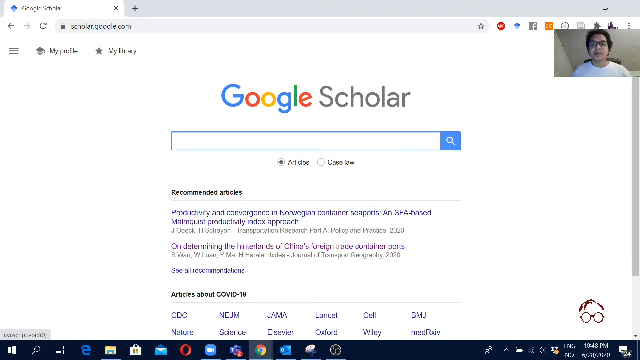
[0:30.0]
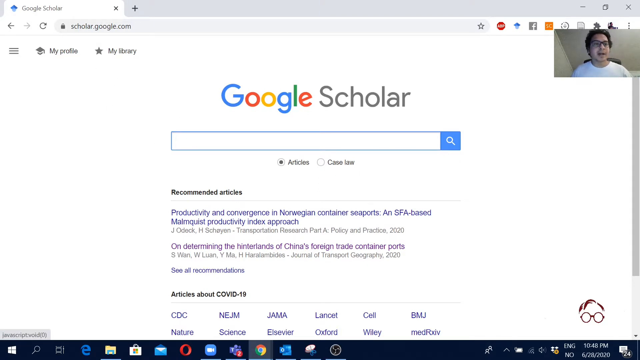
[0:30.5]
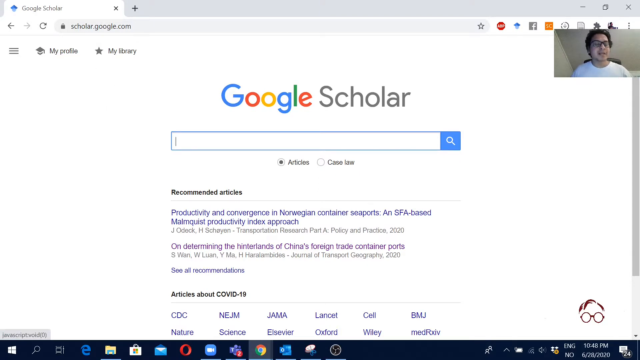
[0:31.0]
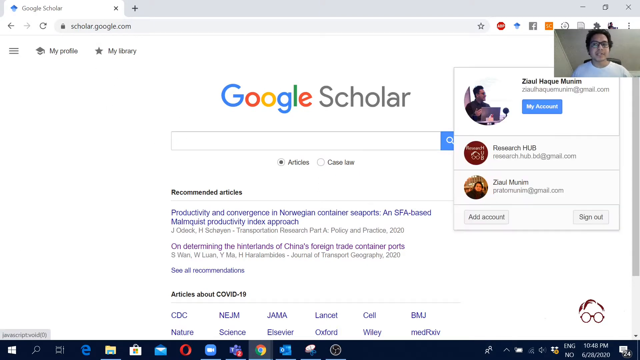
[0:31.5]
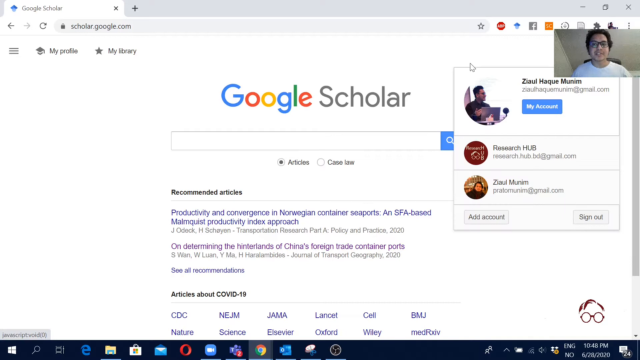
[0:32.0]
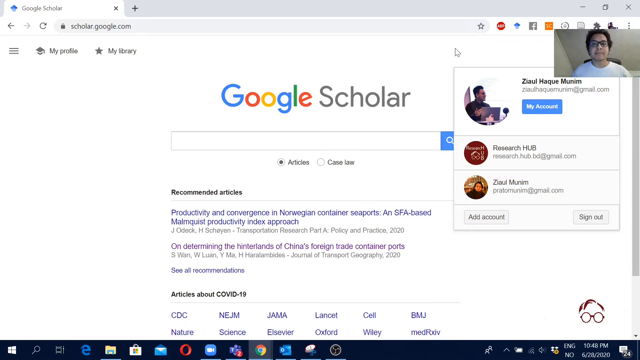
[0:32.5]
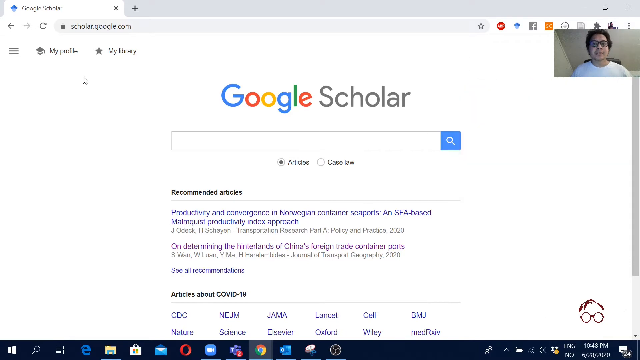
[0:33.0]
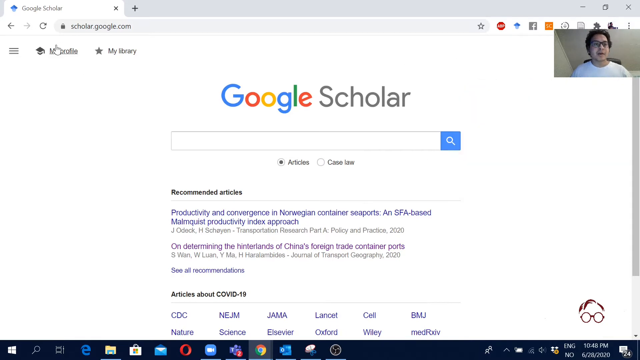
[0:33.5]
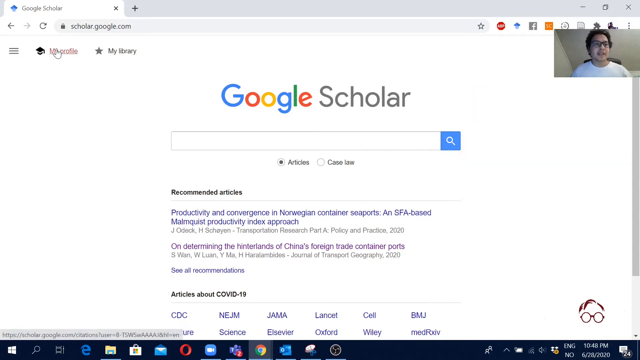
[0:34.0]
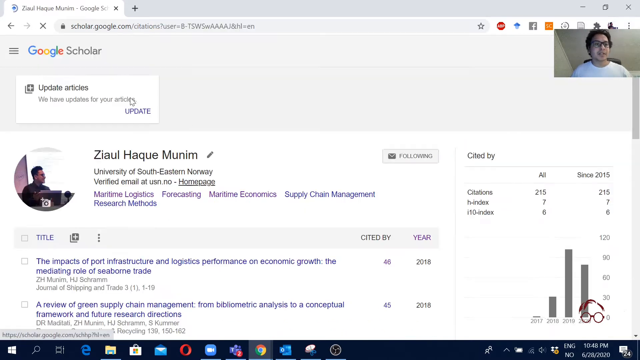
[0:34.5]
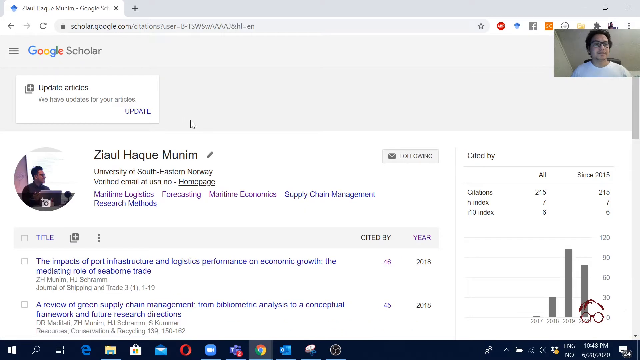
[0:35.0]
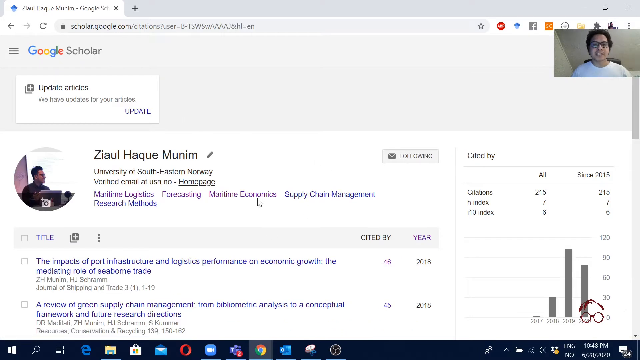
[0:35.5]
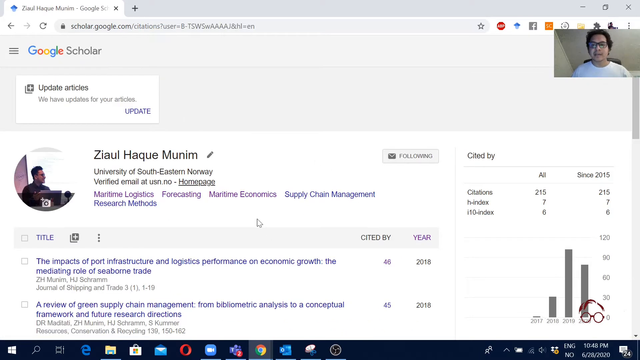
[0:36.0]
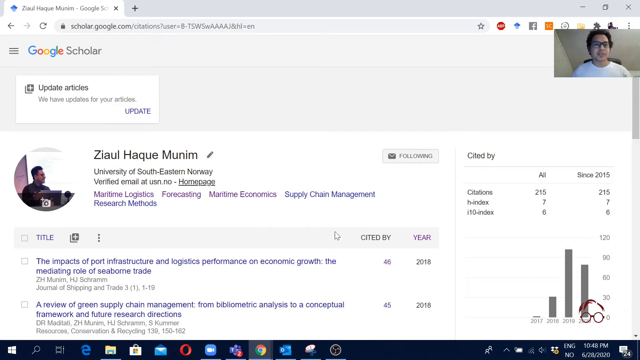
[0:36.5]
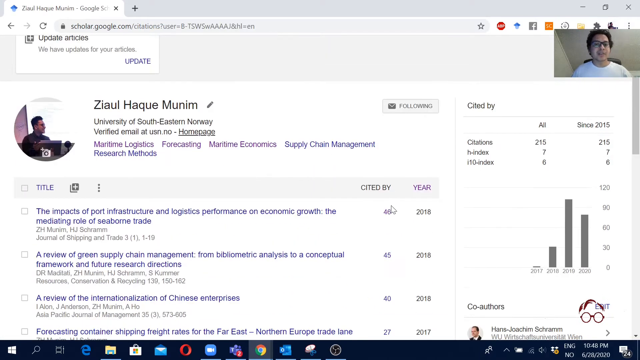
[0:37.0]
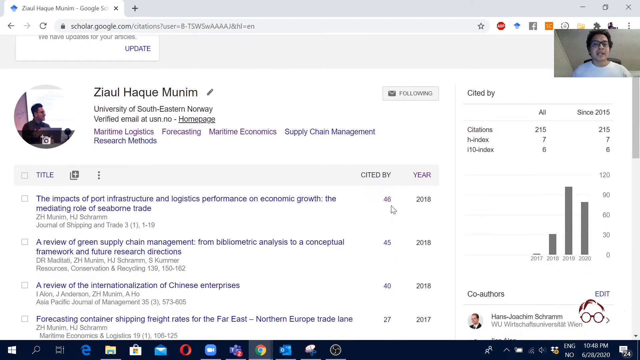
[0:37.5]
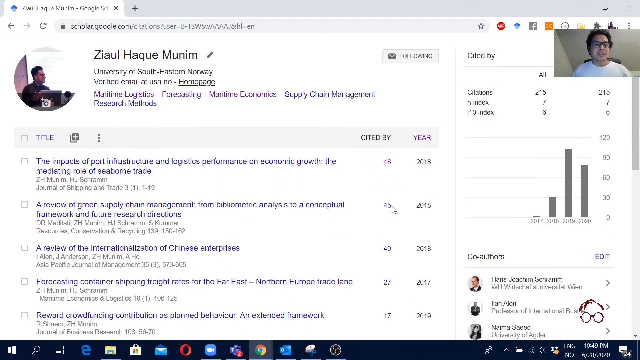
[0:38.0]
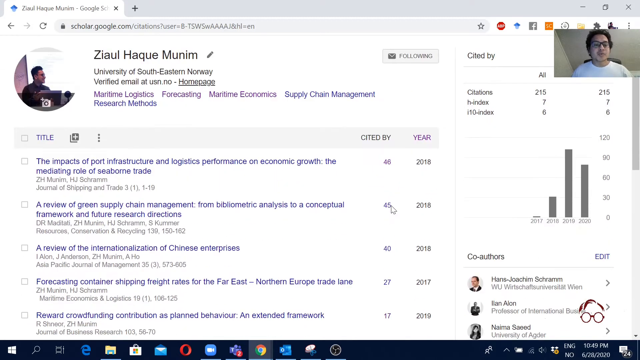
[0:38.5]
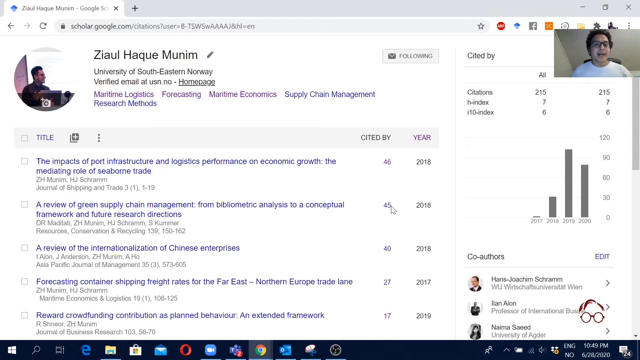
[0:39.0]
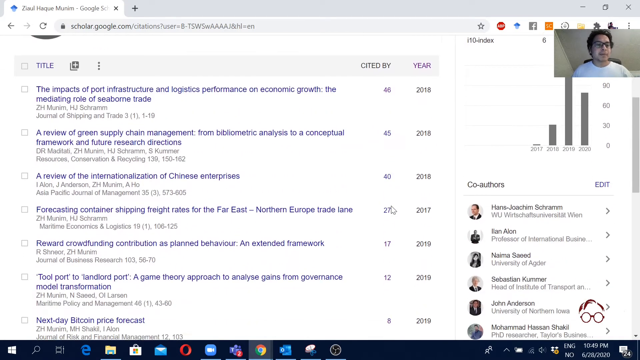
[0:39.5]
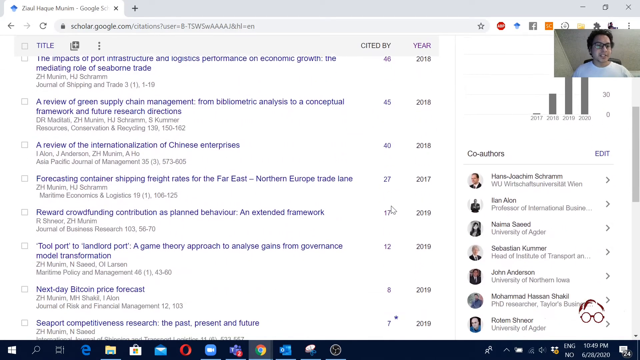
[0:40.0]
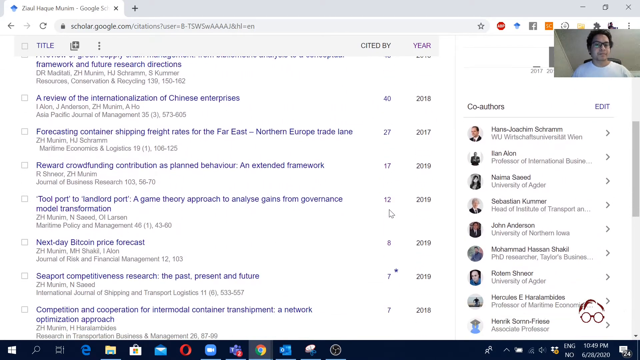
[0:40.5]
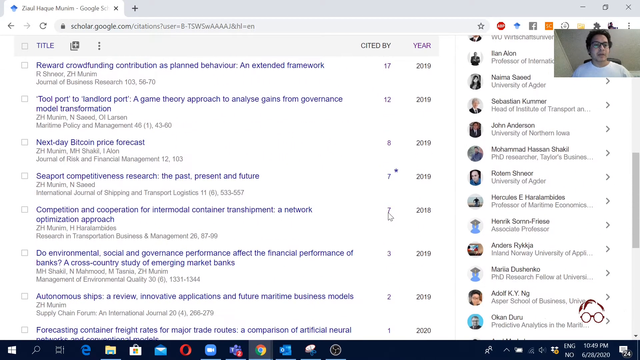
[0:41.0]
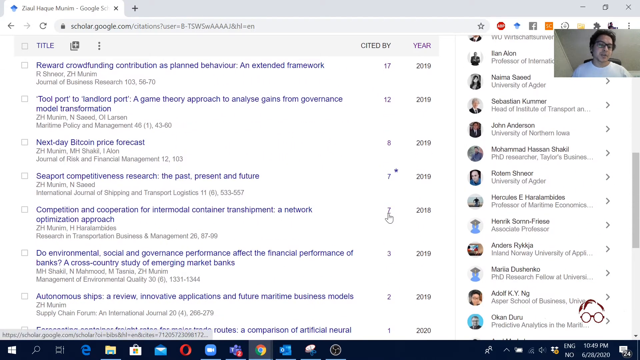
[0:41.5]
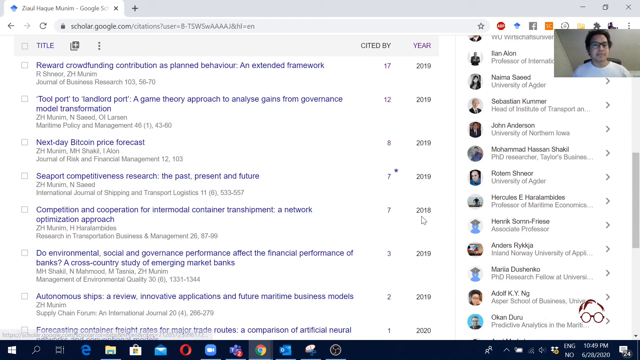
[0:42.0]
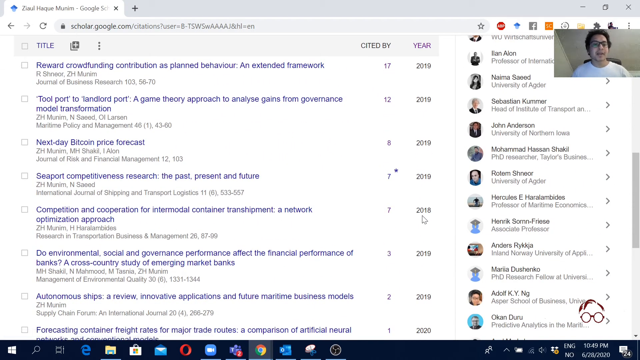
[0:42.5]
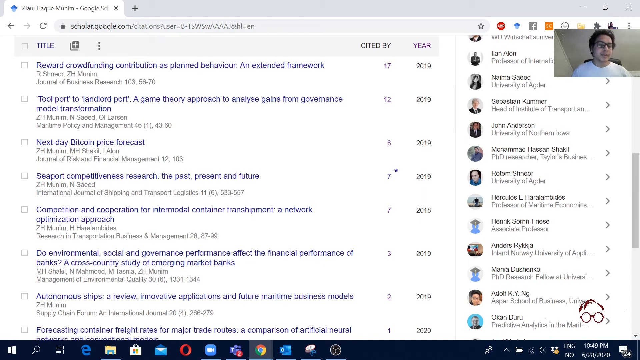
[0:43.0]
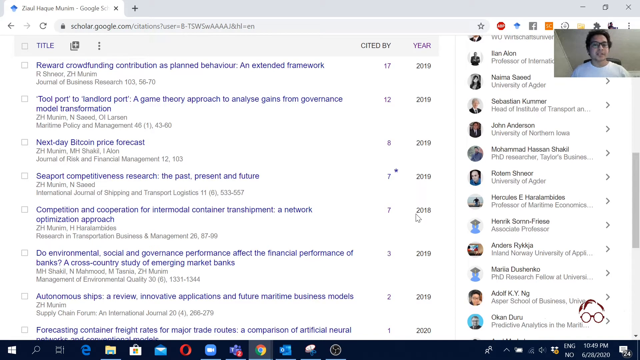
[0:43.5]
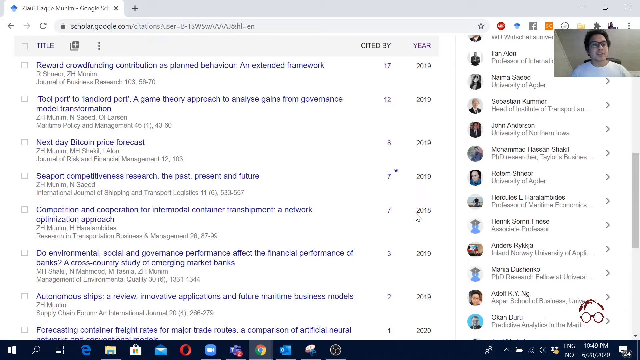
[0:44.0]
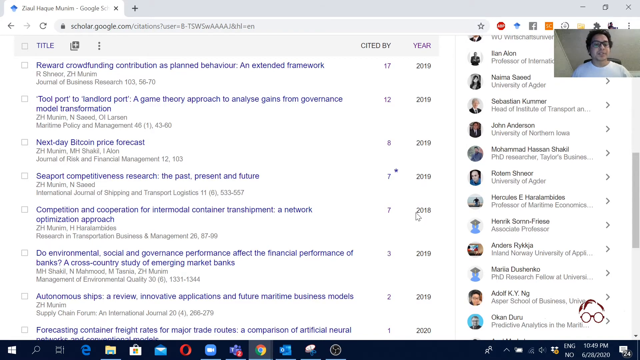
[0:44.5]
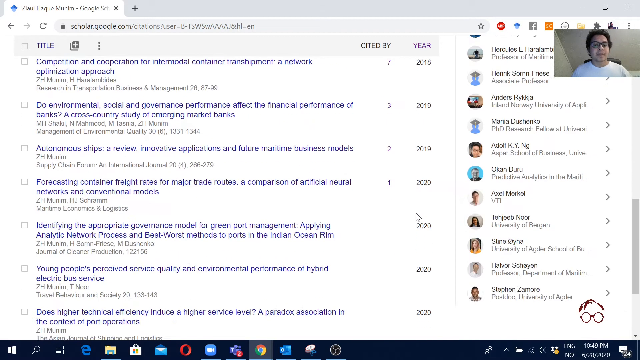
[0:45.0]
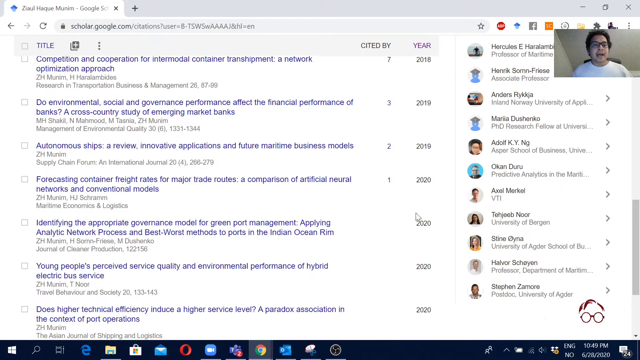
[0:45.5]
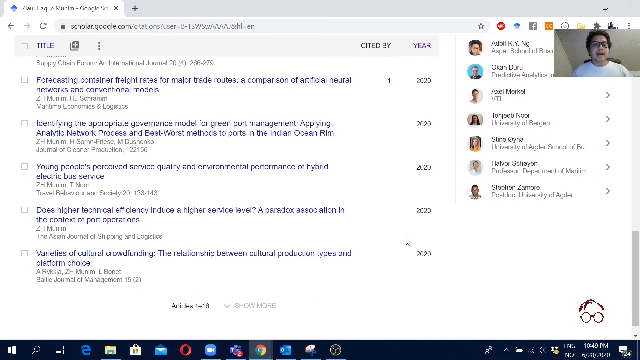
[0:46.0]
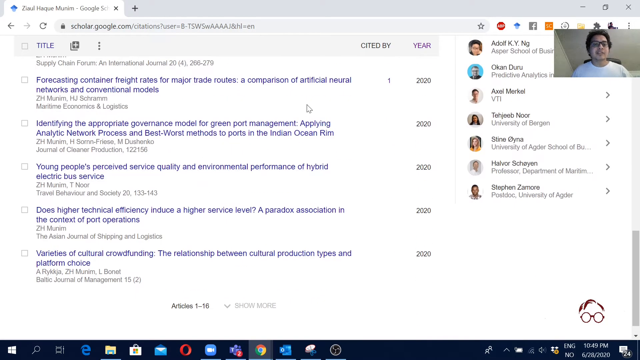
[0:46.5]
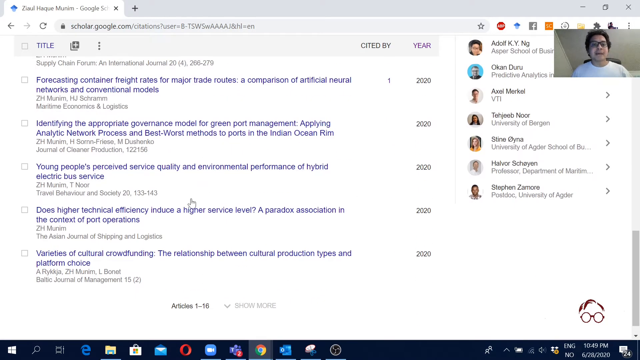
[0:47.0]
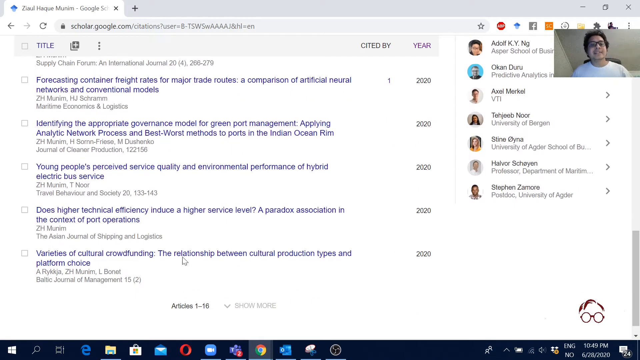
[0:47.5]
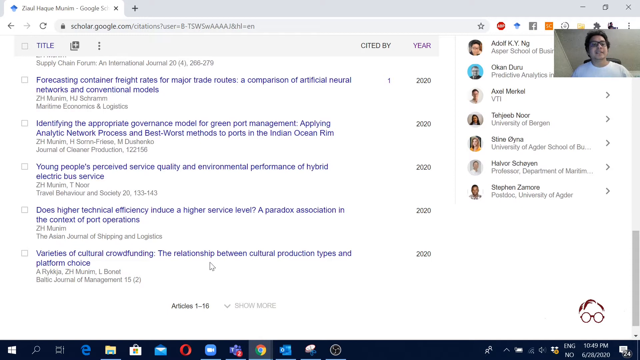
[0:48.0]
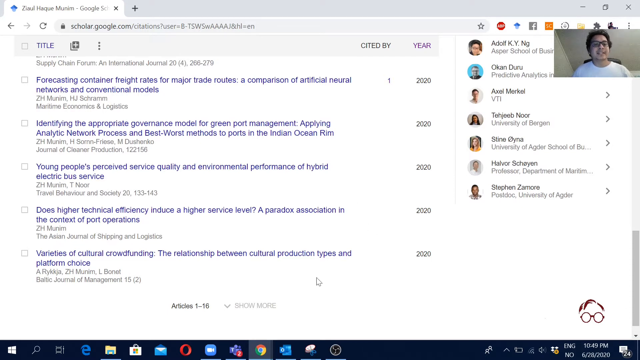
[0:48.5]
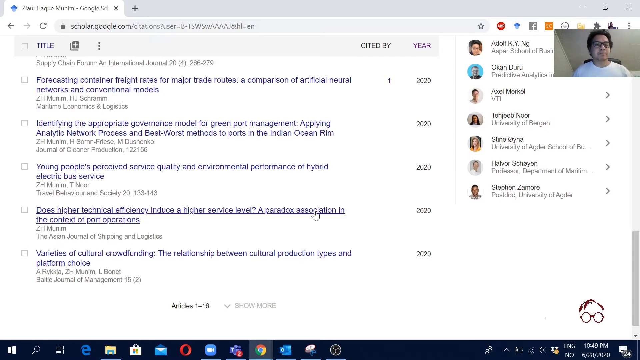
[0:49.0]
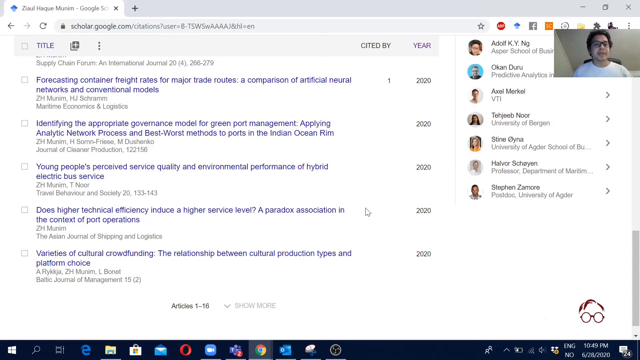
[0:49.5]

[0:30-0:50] A person gives a tutorial on how to use Google Scholar, with a running video of the man in the upper right-hand corner. Pages on his computer are visible as he moves through them. He opens a spot on the left and clicks on "my profile". His profile comes up, showing his picture, his name, some stats on the sides, people he is friends with, the years things happened, and links that can be clicked in those areas. As he talks, he keeps moving the cursor around in circles to point out the locations he is talking about clicking on.